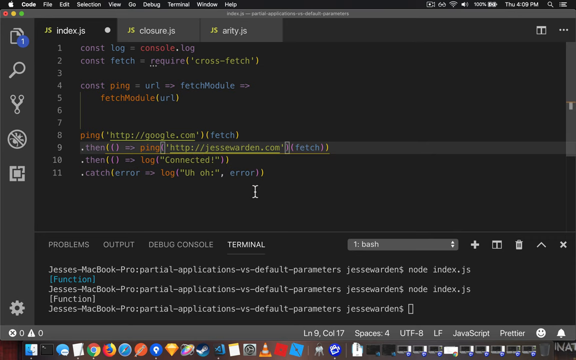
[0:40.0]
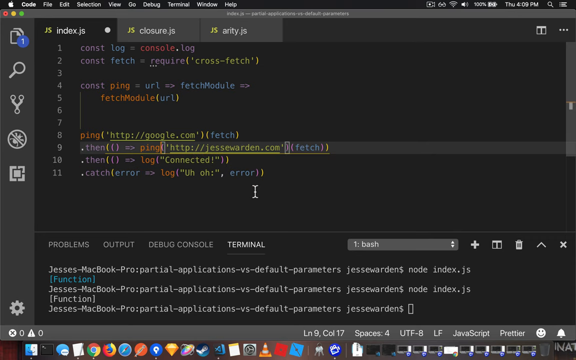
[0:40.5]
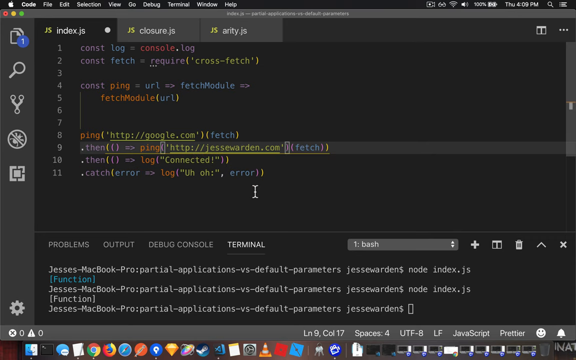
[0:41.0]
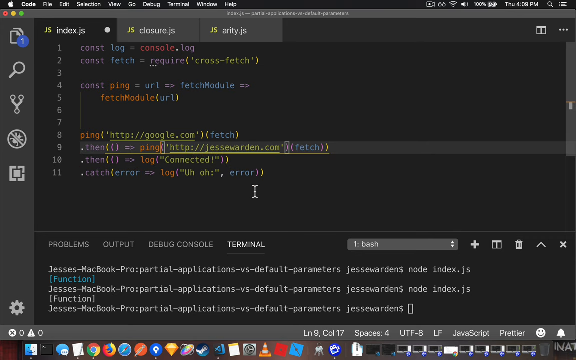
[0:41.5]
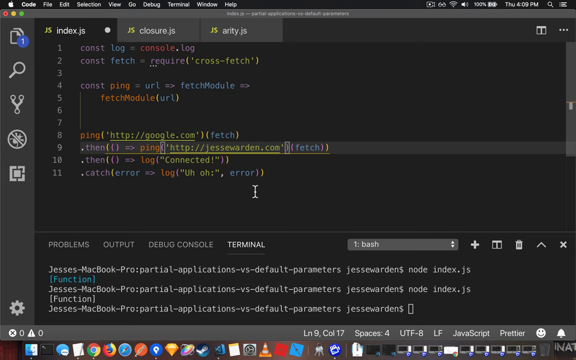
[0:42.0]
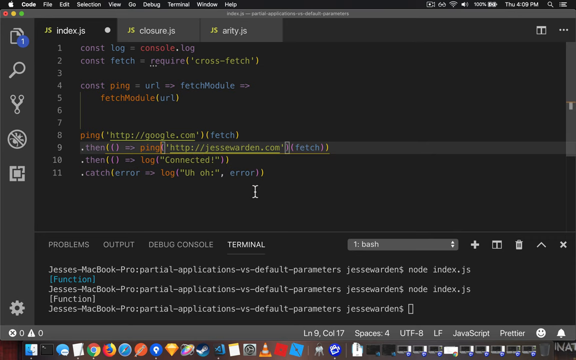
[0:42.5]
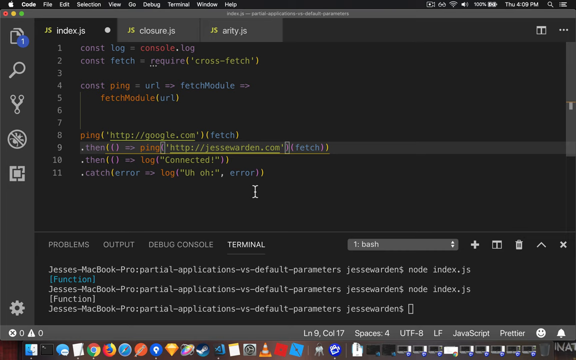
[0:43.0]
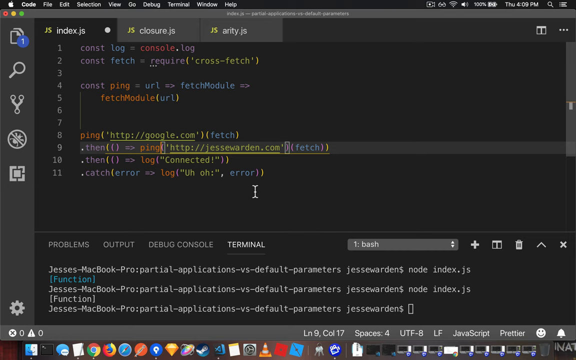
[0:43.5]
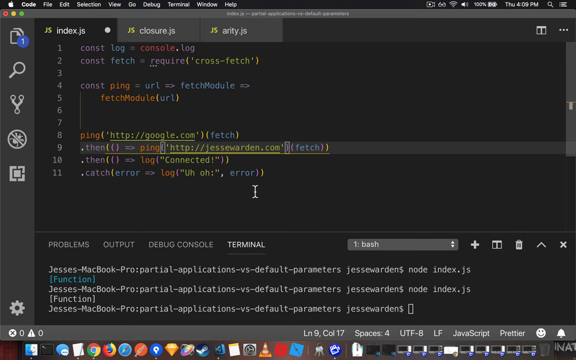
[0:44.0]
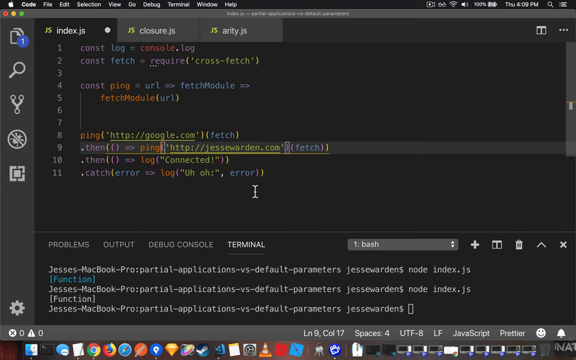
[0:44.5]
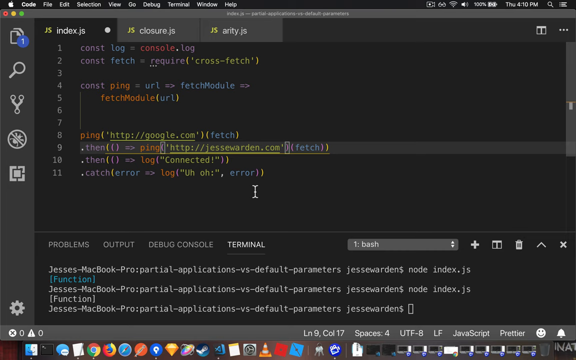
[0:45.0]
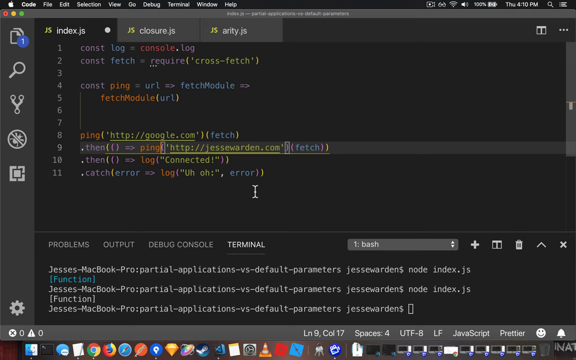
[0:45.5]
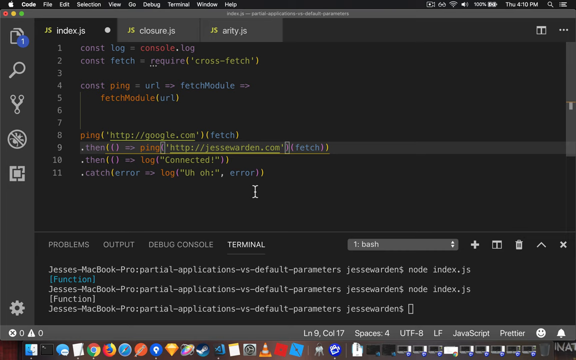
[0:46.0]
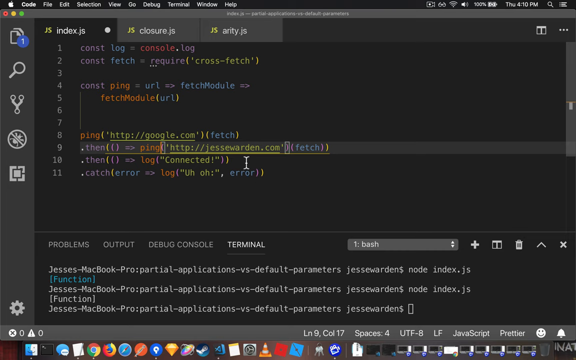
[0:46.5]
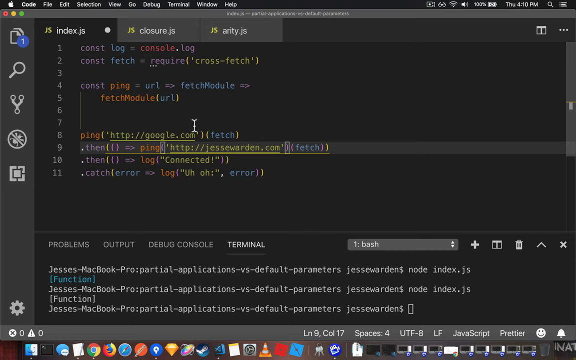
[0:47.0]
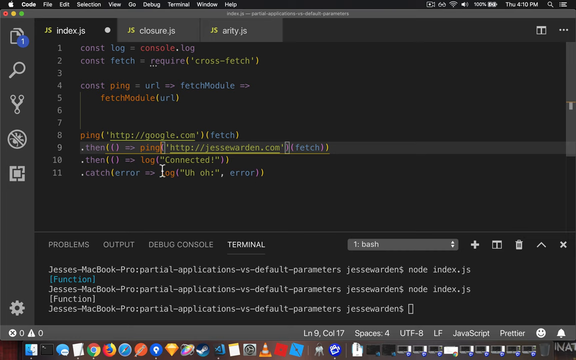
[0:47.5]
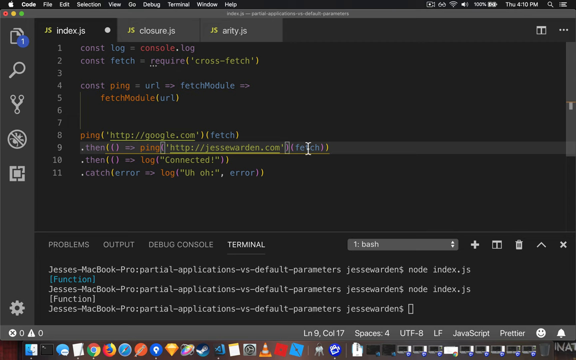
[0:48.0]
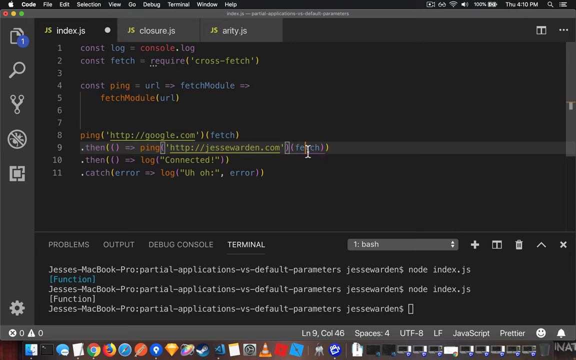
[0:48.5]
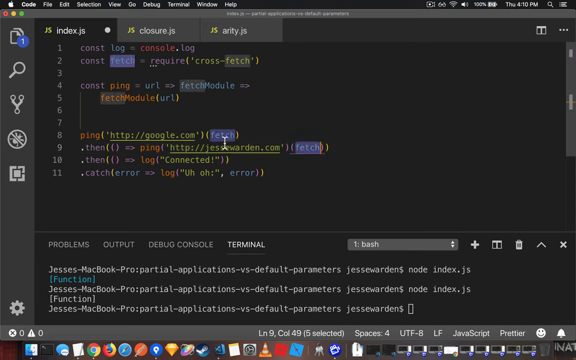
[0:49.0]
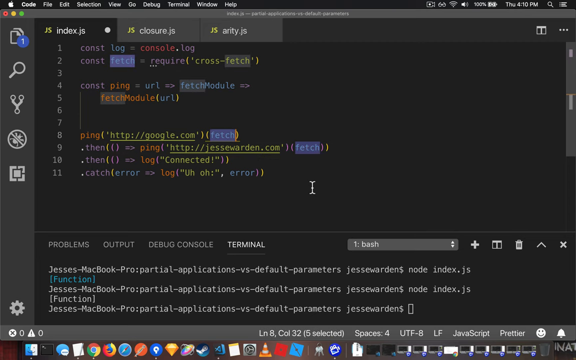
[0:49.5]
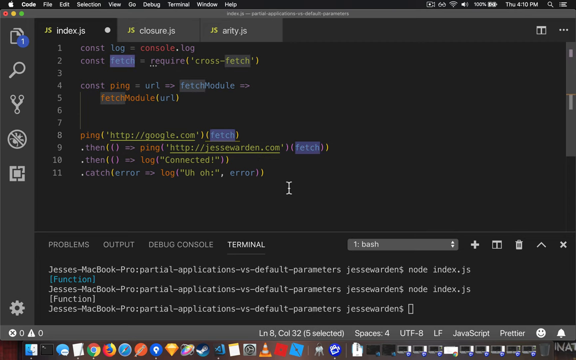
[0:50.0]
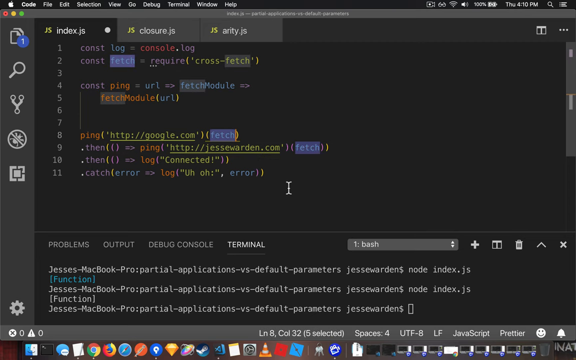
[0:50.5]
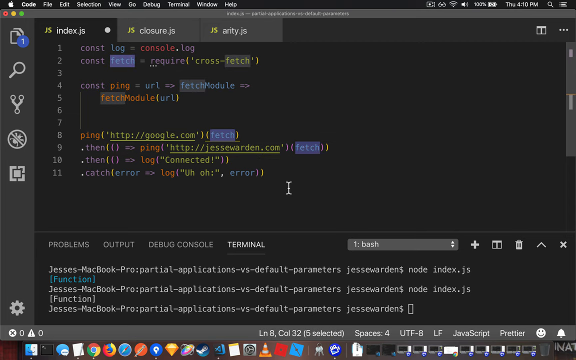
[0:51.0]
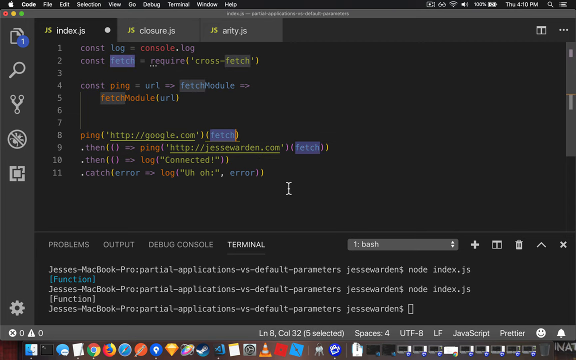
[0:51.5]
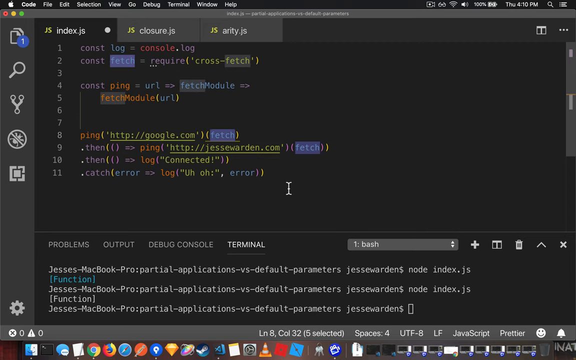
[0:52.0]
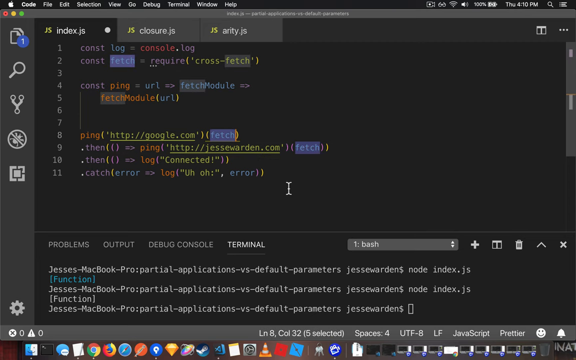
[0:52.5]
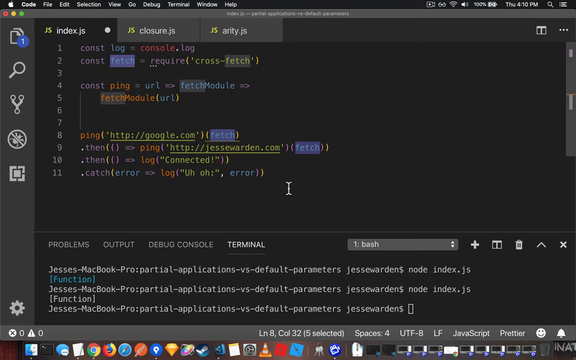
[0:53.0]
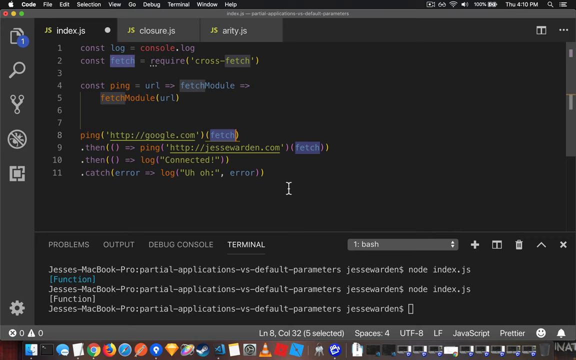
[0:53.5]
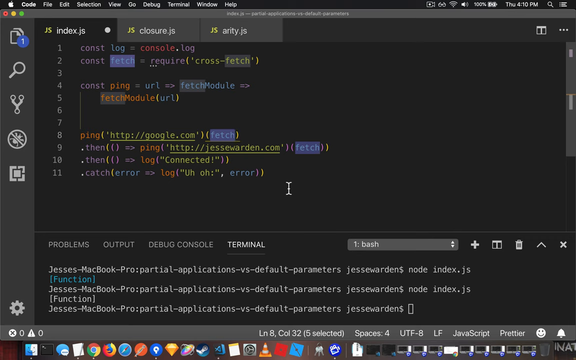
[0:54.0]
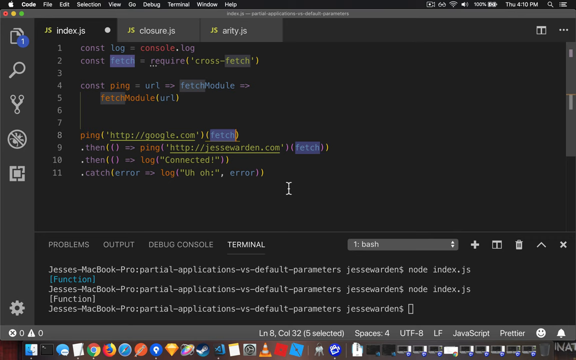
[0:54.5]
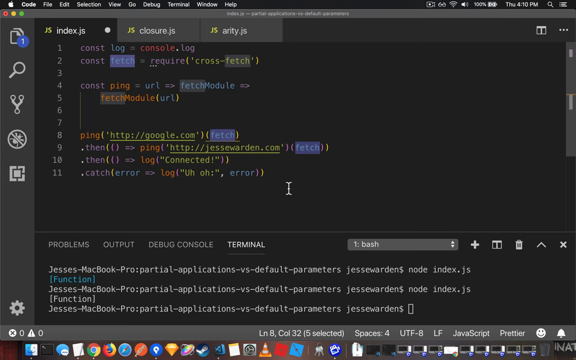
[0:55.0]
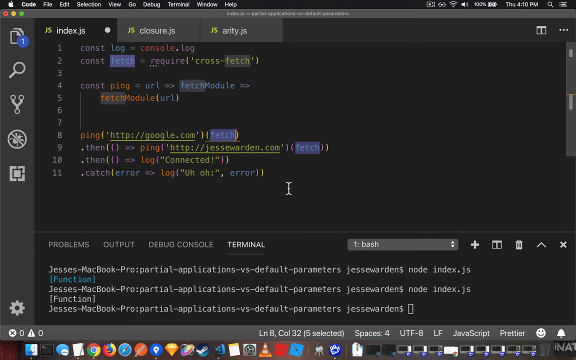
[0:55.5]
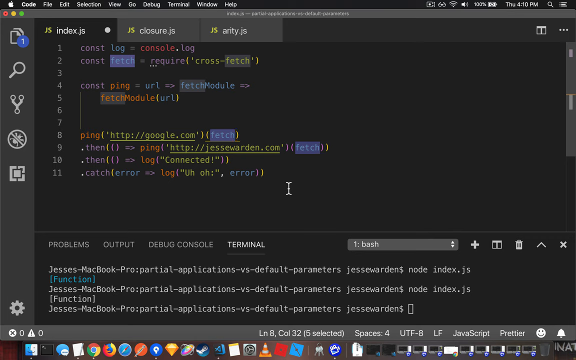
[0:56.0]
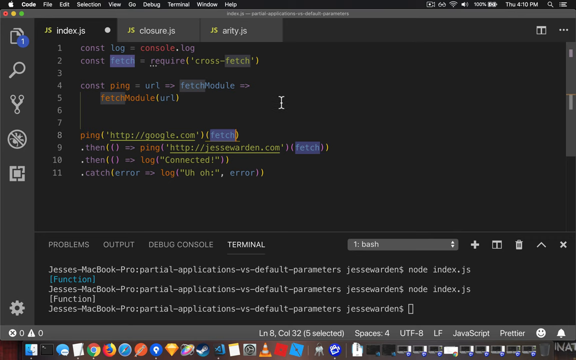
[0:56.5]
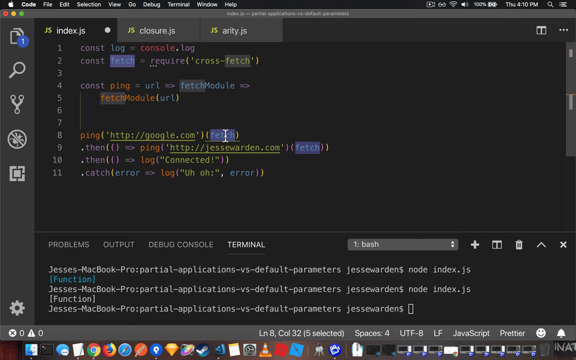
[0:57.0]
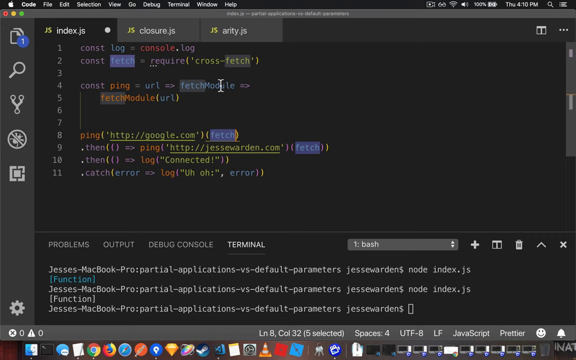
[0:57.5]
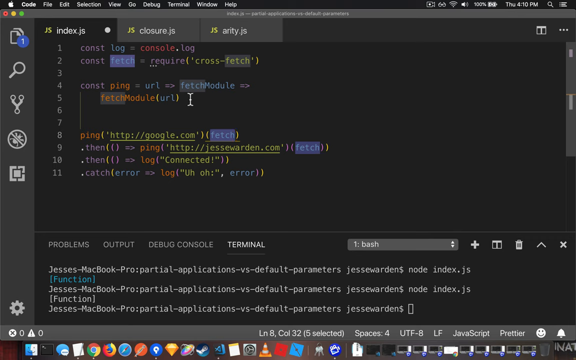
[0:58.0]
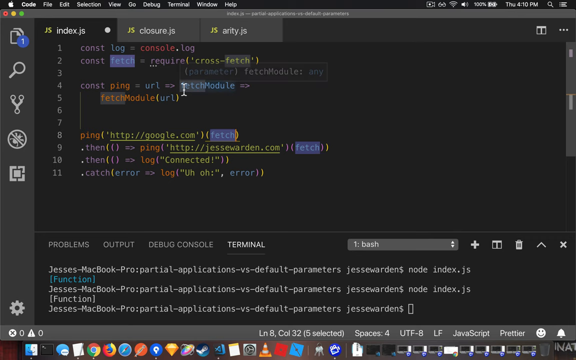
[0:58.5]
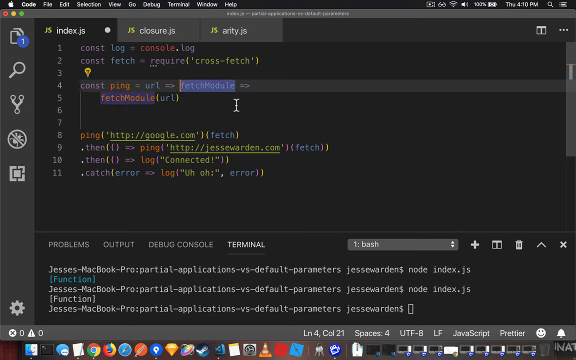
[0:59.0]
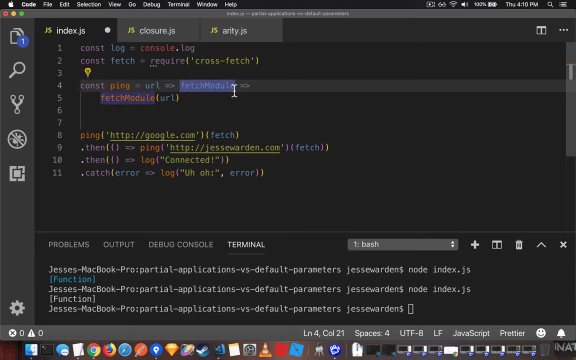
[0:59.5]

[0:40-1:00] A lot of code appears on a gray background, with "JS index.js" at the top and an Apple navigation bar, indicating an Apple platform. There are 11 lines of code, reading in part "const log equals const fetch equals require cross fetch const ping equals URL fetch module fetch module URL ping HTTP colon backslash backslash Google.com fetch then ping equals the jessewarden.com fetch then log connected catch error log uh-oh error." The HTTP jessewarden.com text is highlighted. A white mouse cursor is present throughout and moves around. It goes to the fetch text to the right of HTTP jessewarden.com and double-clicks it, highlighting it along with all the other fetch text. The cursor then double-clicks the fetch text above, next to google.com, which again highlights all the other fetch text. The cursor moves a little toward the bottom right, returns to the middle, and highlights fetch module on the fourth line. The sequence seems to show that double-clicking a word highlights all other instances of the same word in the code.